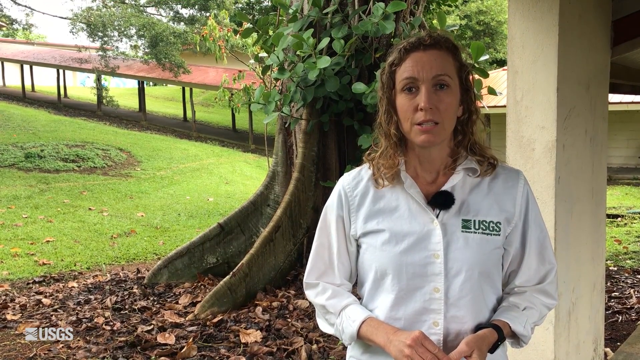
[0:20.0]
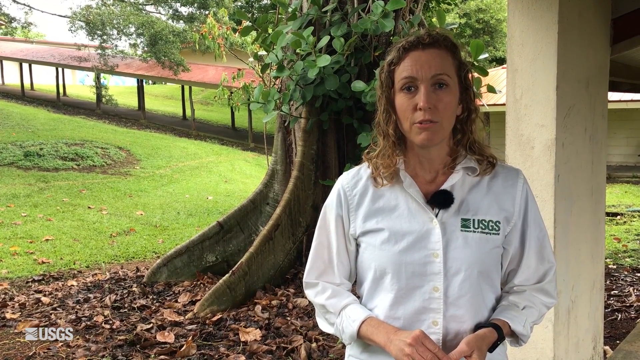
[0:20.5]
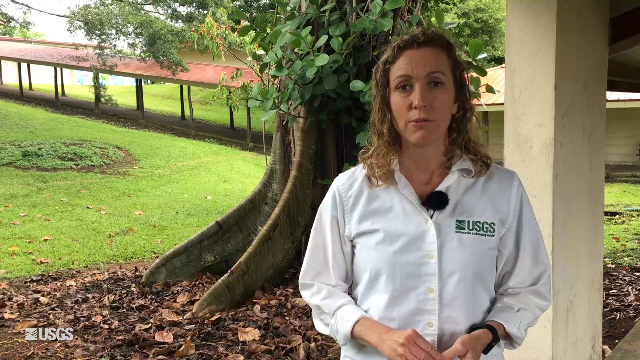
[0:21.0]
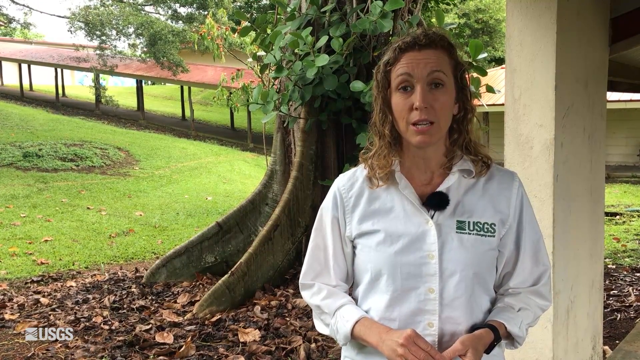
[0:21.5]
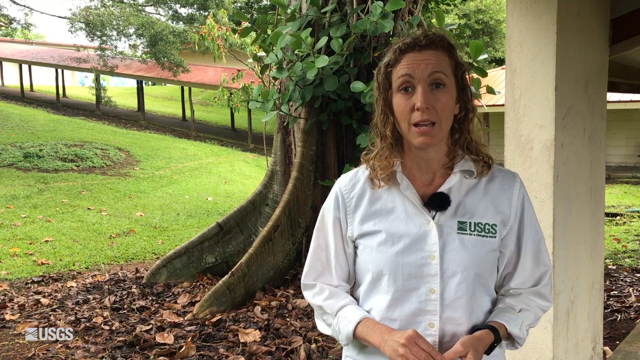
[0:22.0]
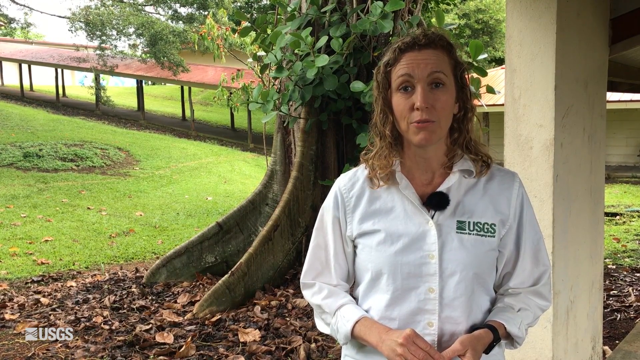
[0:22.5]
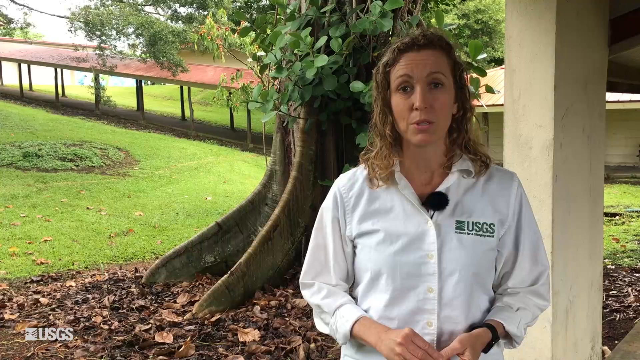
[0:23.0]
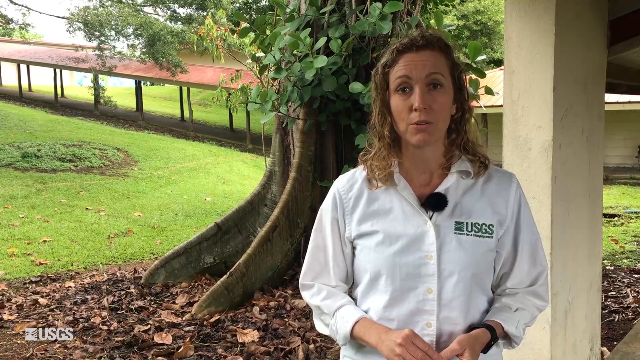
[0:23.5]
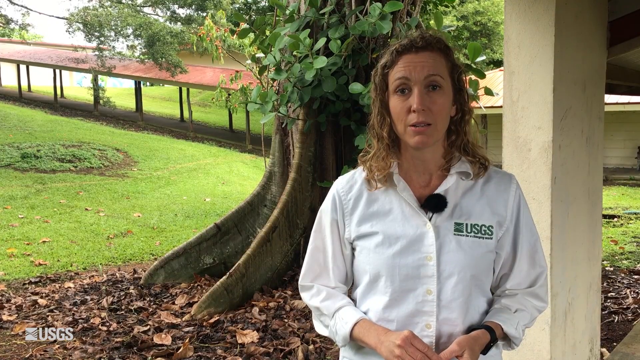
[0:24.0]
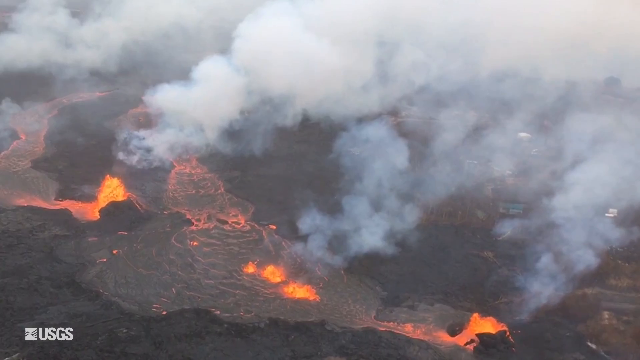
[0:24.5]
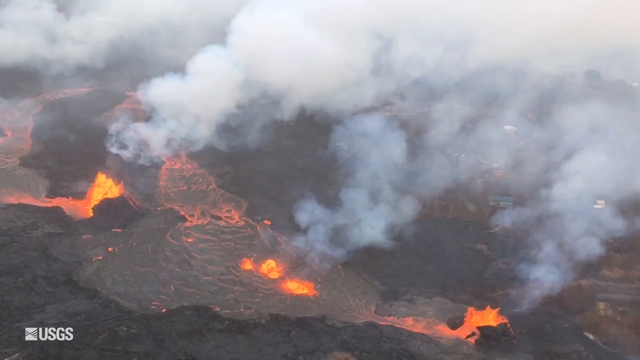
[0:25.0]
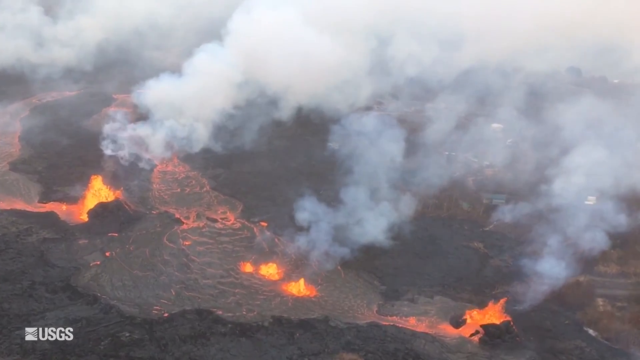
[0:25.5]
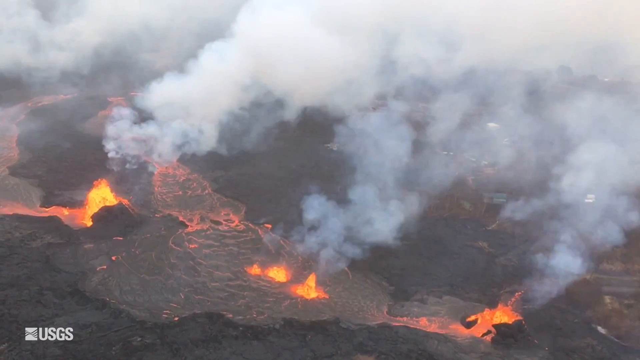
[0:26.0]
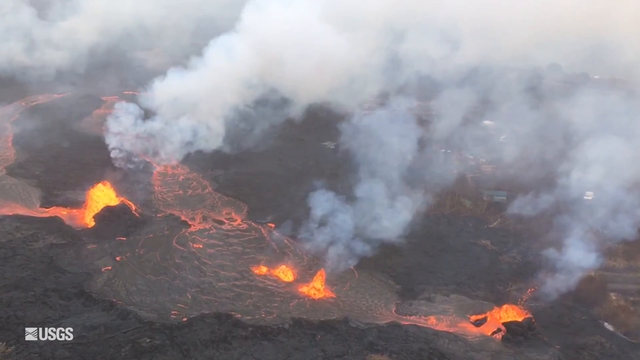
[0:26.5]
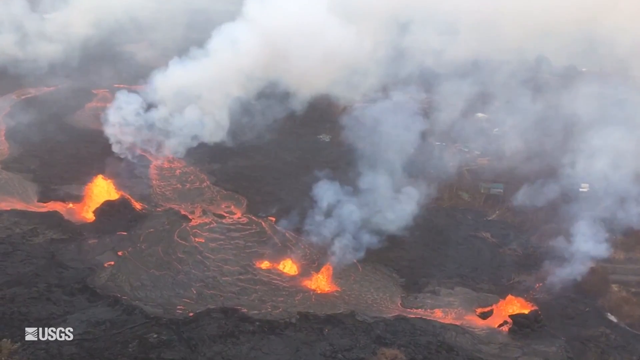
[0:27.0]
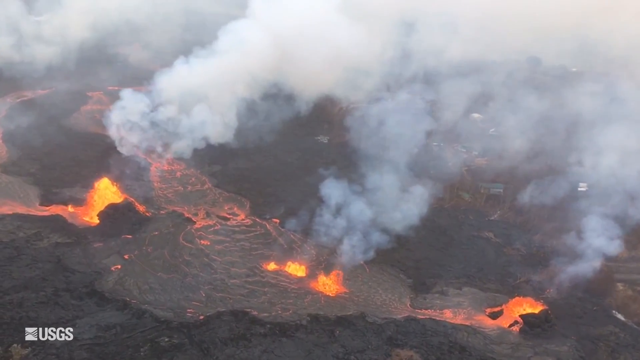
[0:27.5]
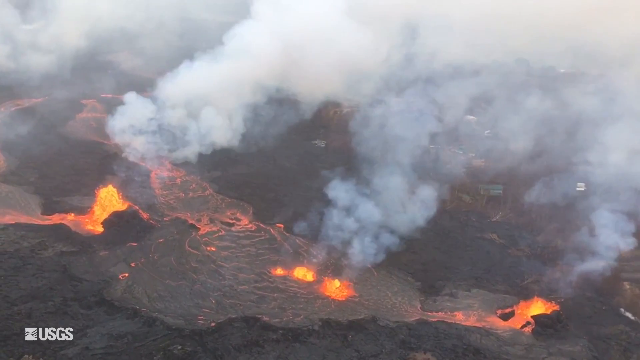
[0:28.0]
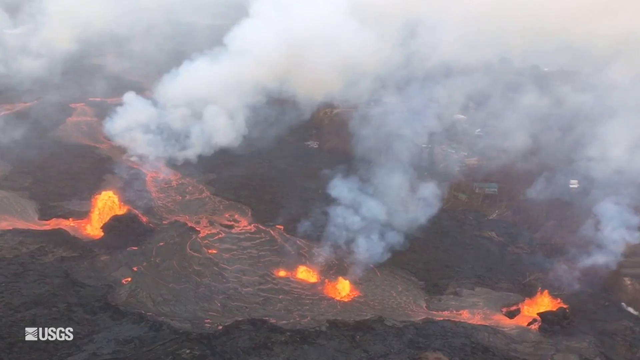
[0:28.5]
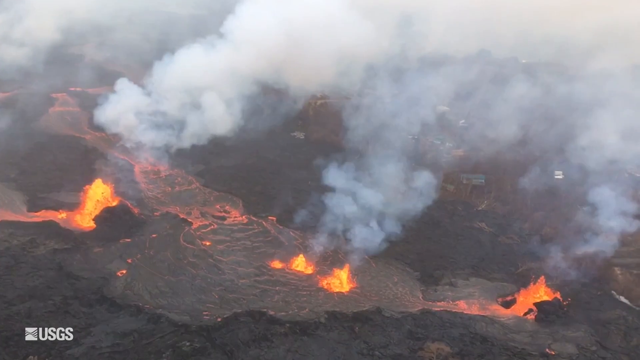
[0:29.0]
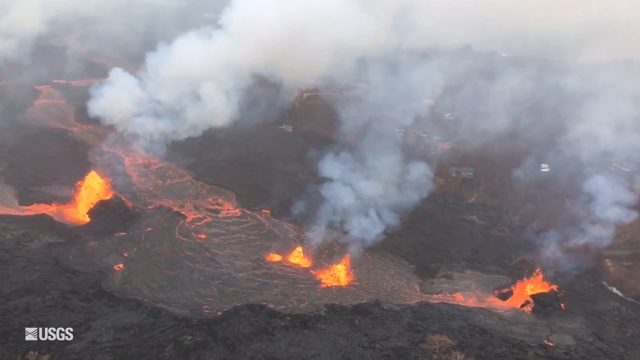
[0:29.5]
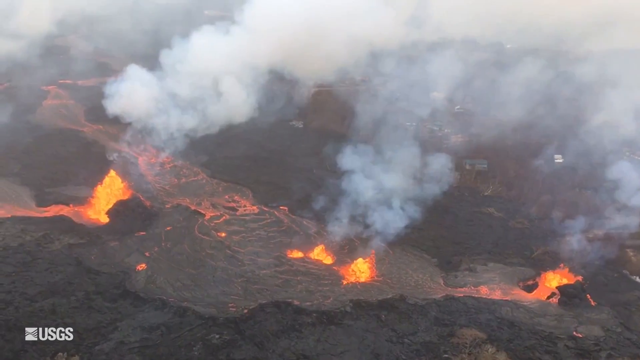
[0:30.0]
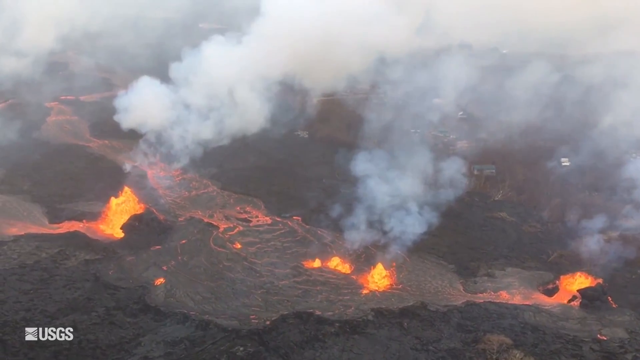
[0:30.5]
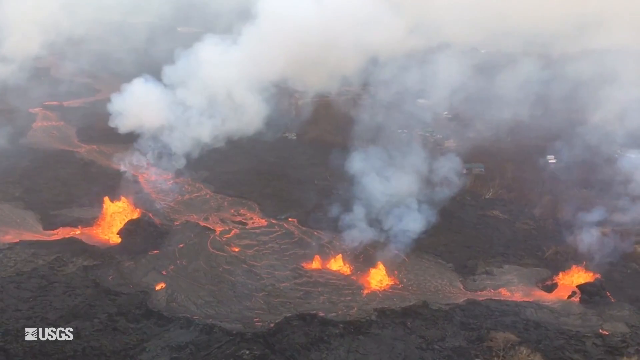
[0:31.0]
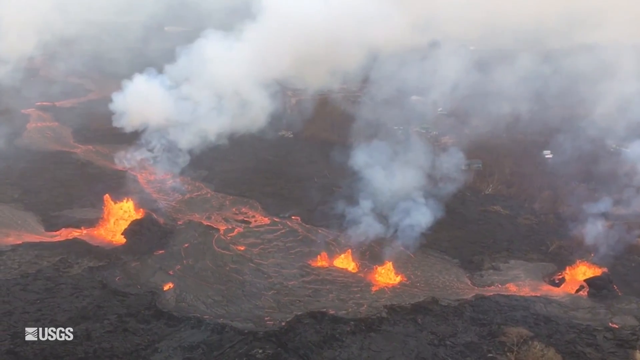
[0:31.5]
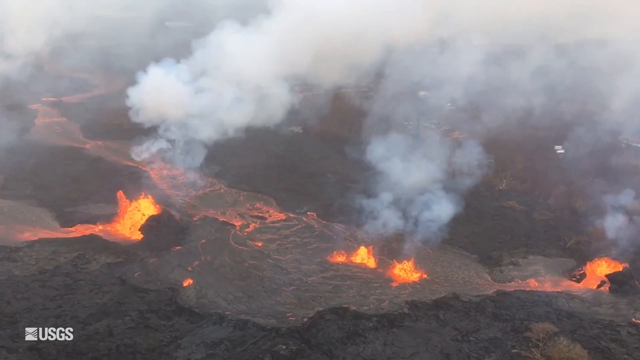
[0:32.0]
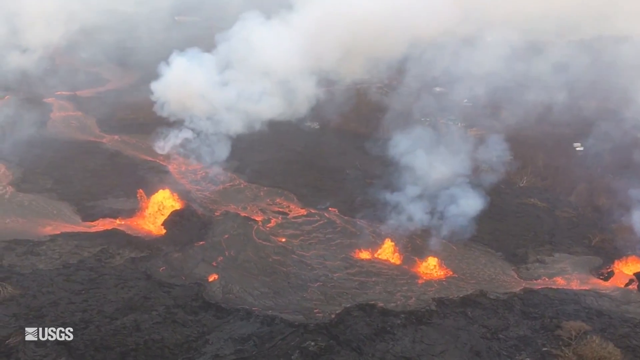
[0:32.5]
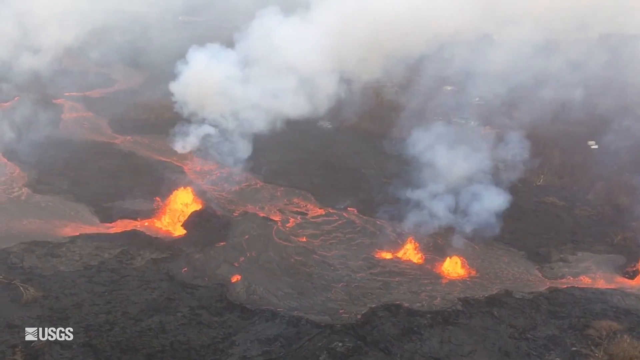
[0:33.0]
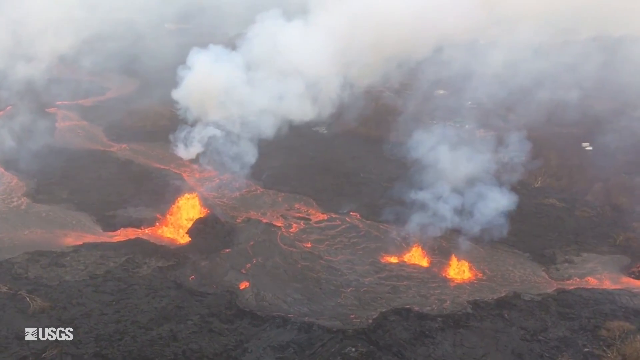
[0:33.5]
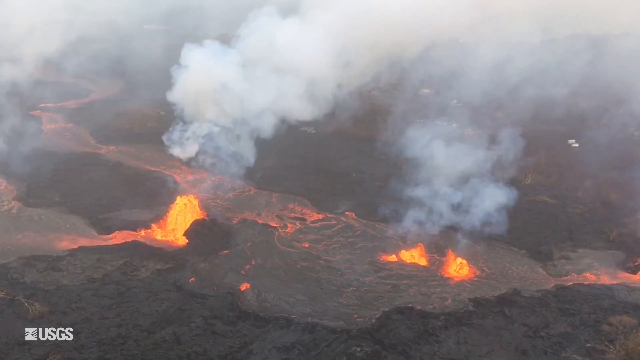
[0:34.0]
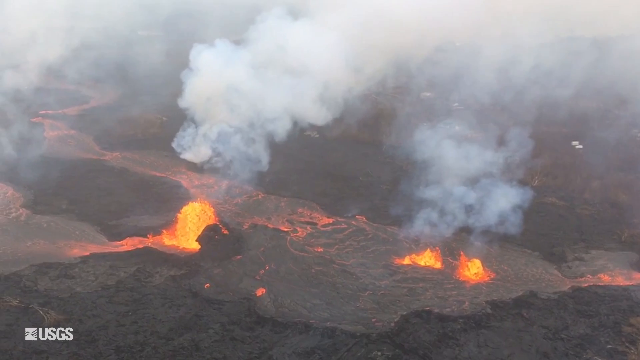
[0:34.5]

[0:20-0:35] The geologist speaks from an outside location, with a tree by her, green grass in the background, and some sort of pavilion structure. Aerial footage, apparently of Kilauea, shows the lava flow and the areas where the lava is flowing up from: a very large flow of lava with more lava flowing up from the volcano. A USGS watermark is in the lower left-hand corner of the video.